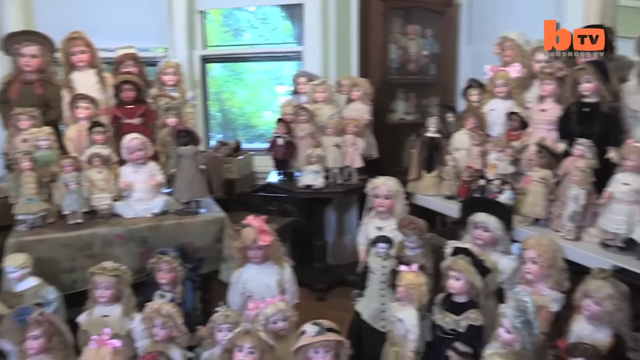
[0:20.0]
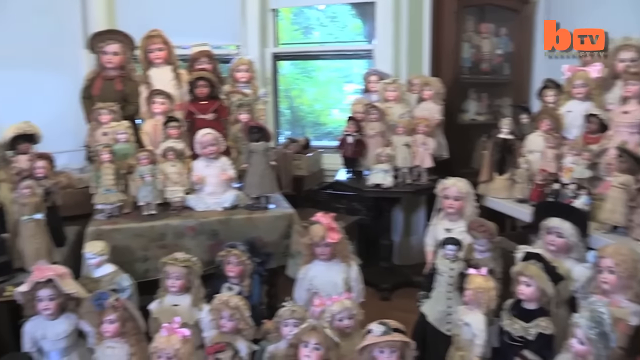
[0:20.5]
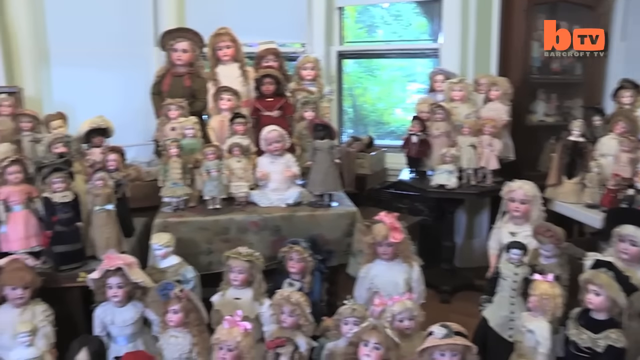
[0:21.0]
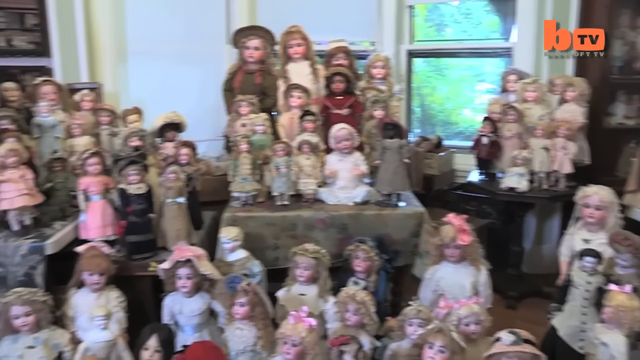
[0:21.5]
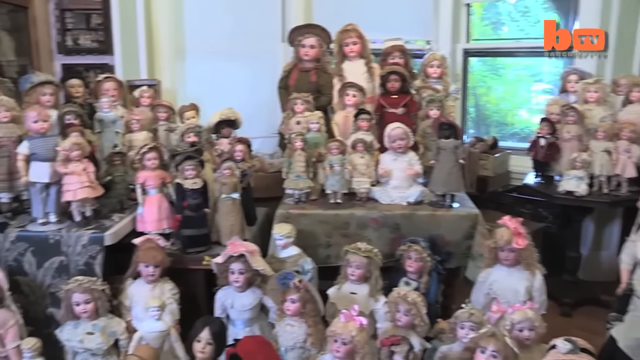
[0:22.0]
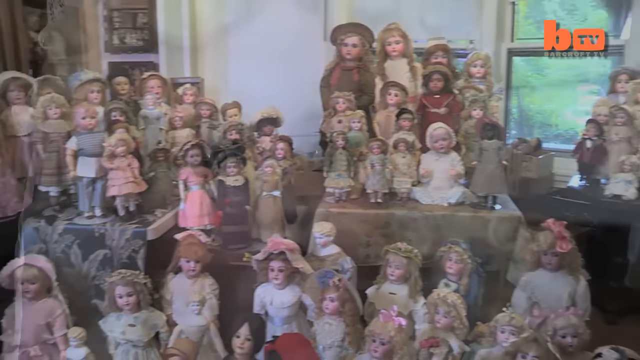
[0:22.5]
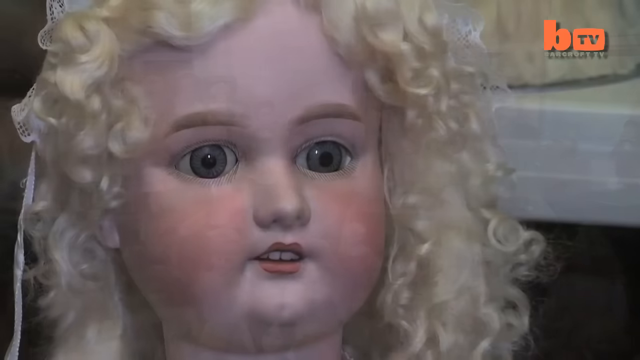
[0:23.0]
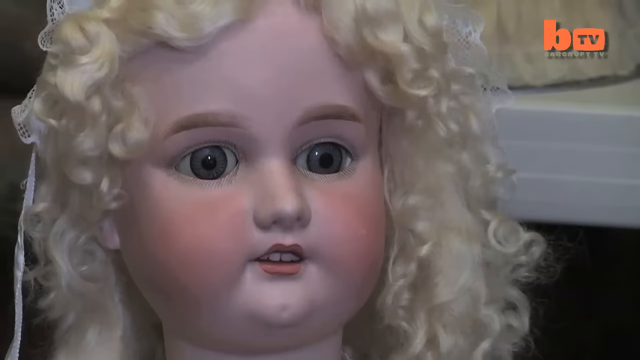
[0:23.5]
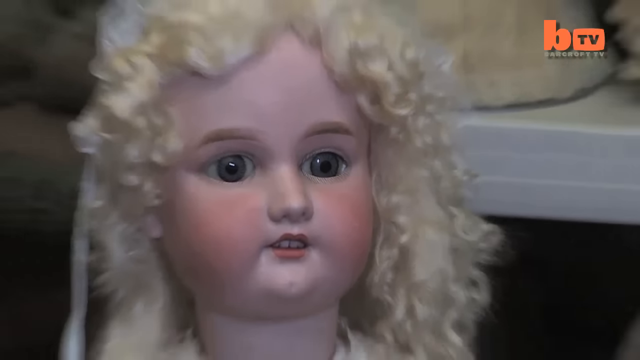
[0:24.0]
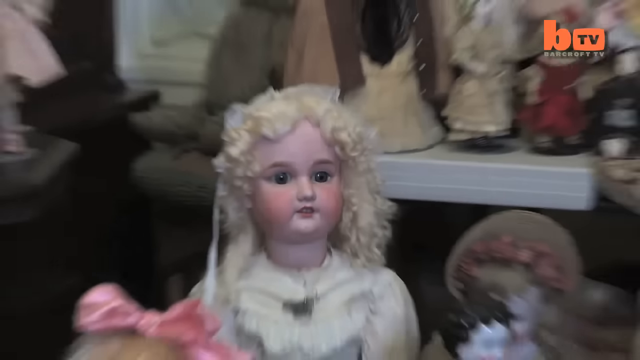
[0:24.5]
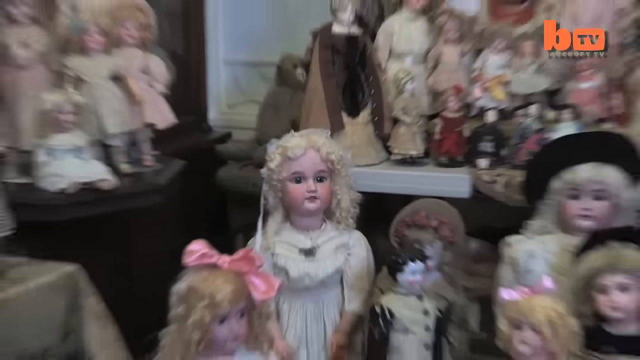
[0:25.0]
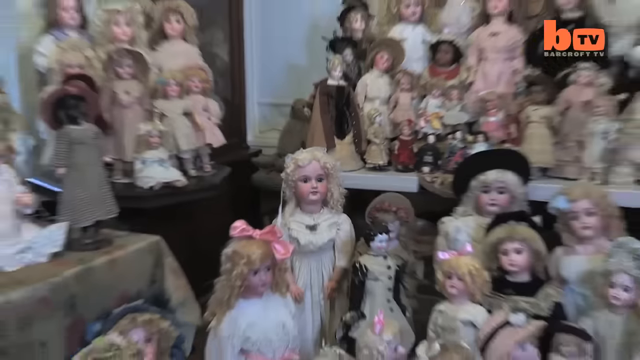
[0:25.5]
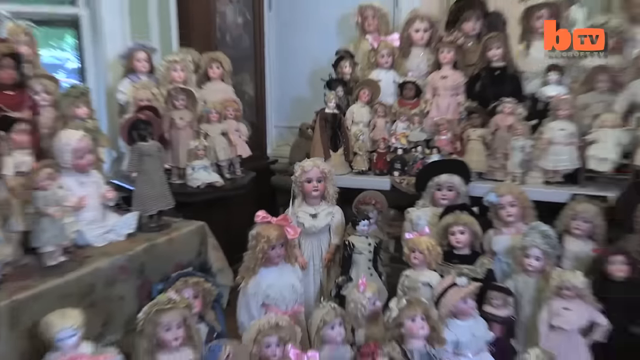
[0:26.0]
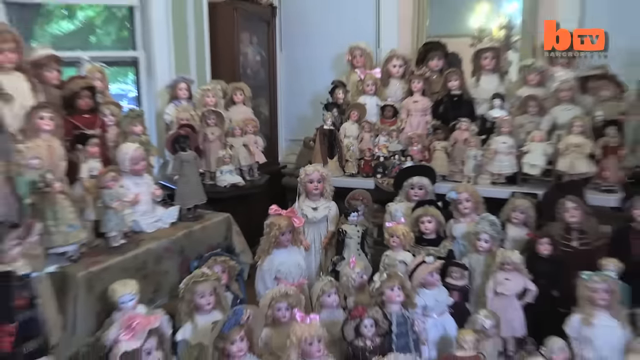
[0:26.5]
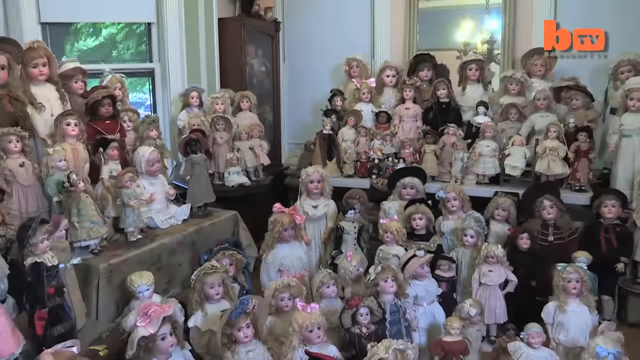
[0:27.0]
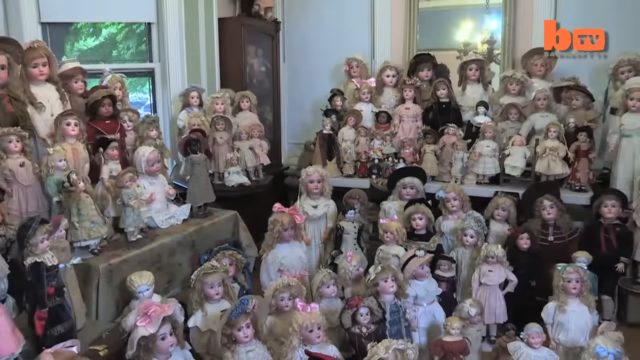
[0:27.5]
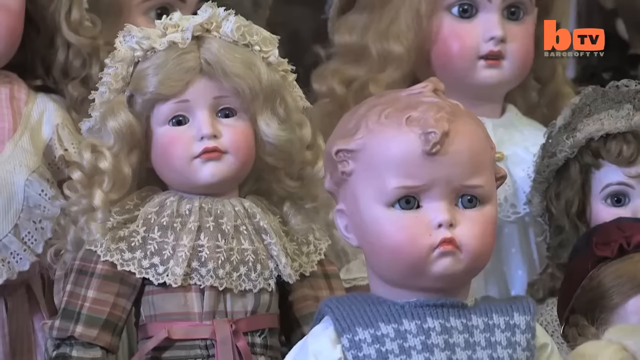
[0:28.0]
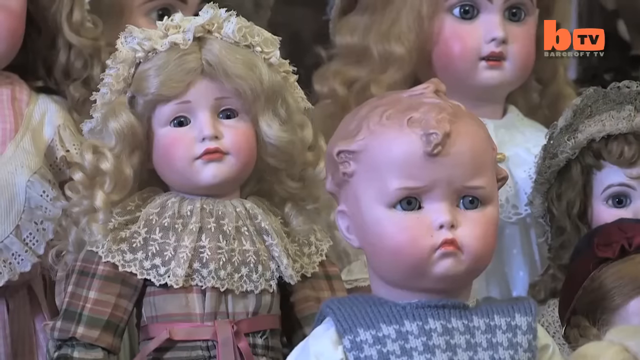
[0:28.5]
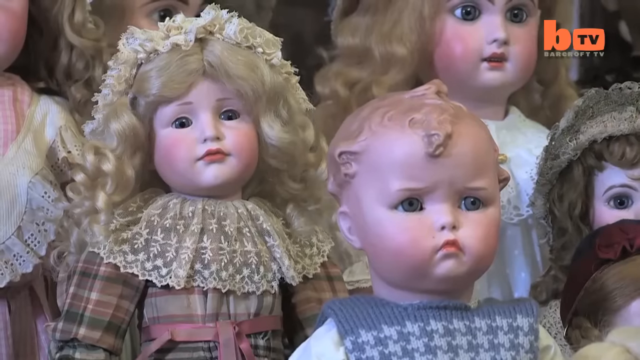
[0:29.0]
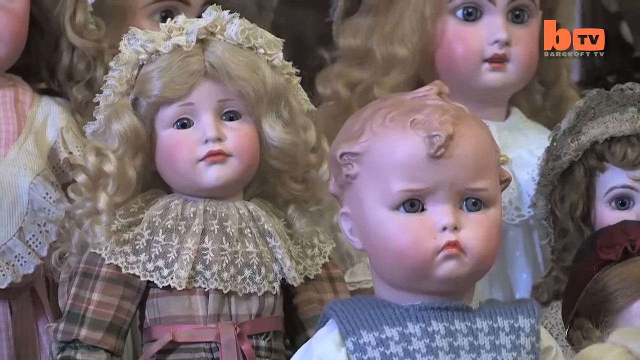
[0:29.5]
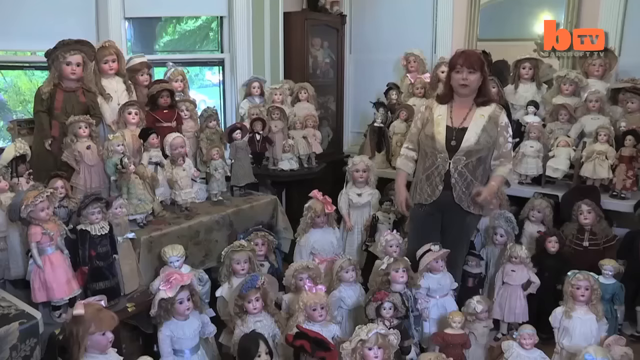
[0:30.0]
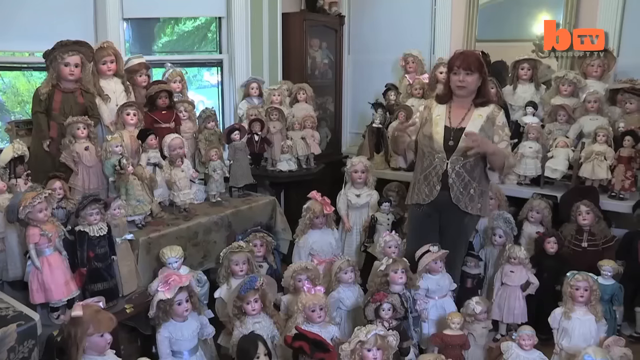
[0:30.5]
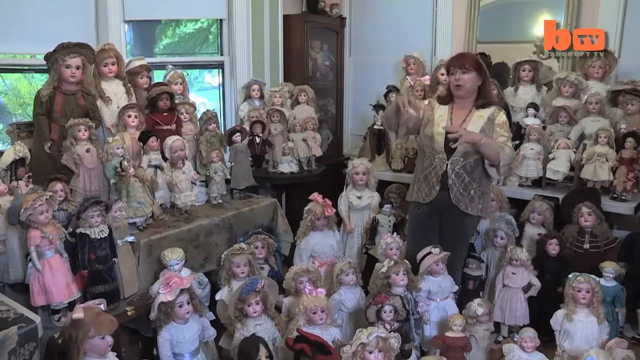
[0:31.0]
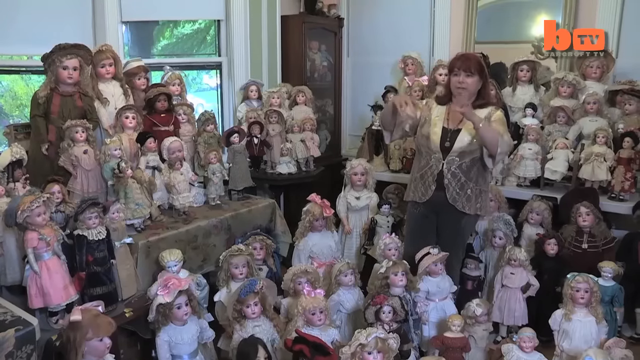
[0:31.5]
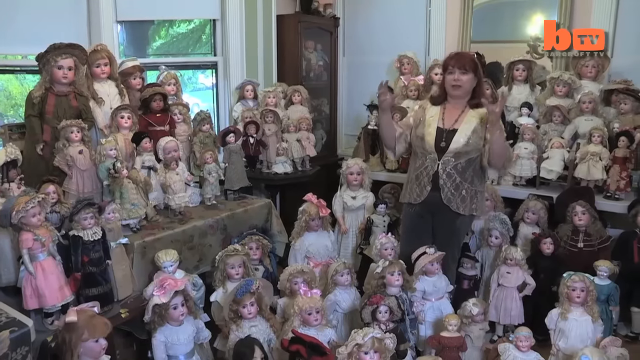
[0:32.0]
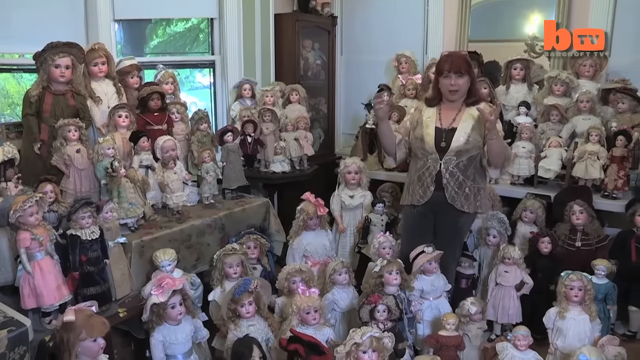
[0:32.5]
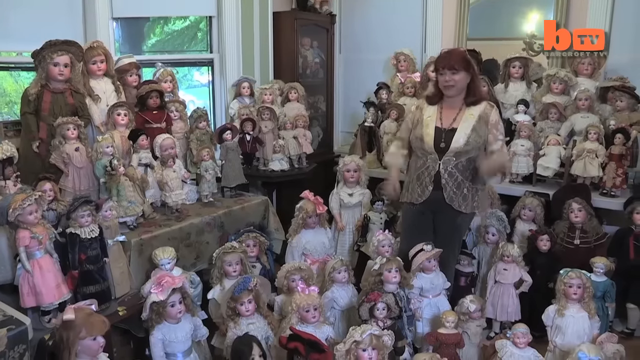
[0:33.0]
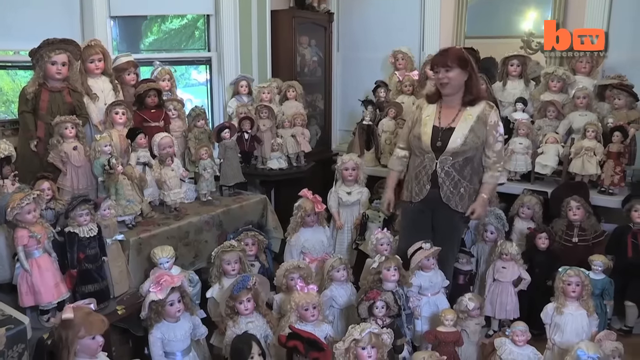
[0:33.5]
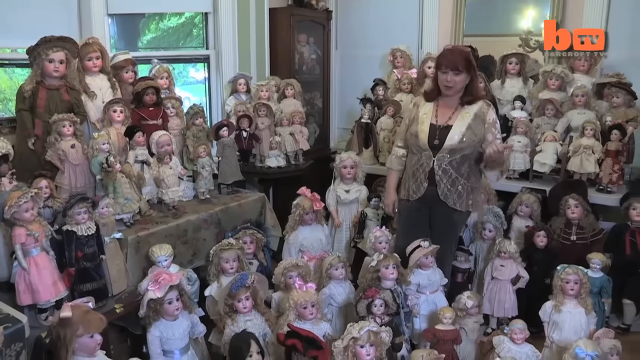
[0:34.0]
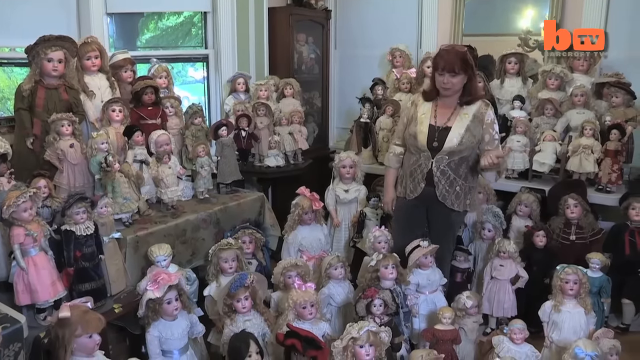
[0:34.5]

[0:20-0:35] The camera moves in a slow rotating motion across the doll collection. A cut zooms in on one doll with very light blonde hair; its two front teeth are shown, and it has very light skin with pinkish color around the cheeks. The camera then zooms out to the collection of dolls. It quickly cuts to another doll and zooms back out, and the woman is now standing in the middle of the doll collection, talking and briefly making motions with her hands.